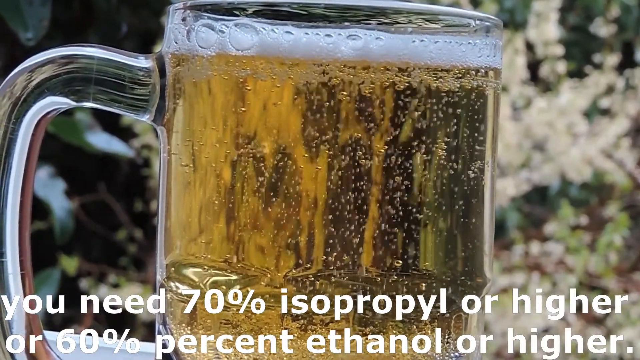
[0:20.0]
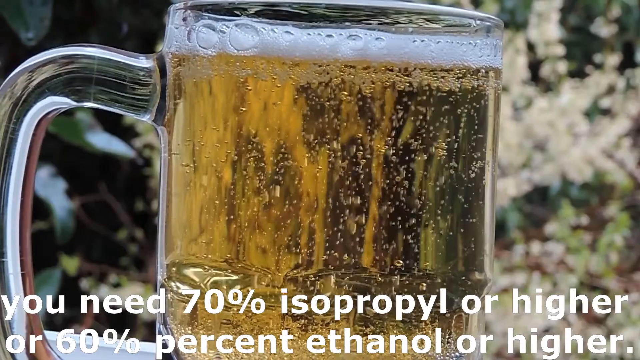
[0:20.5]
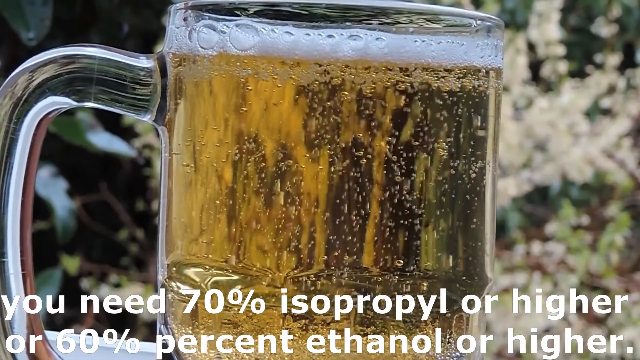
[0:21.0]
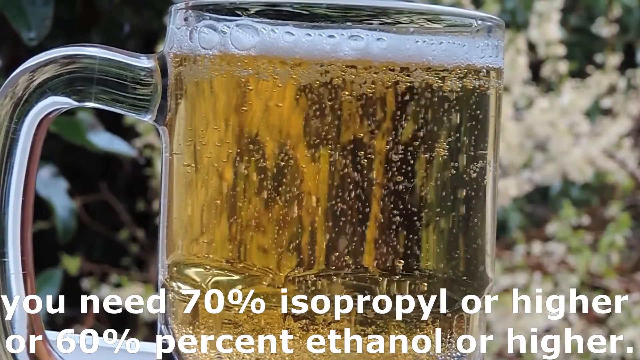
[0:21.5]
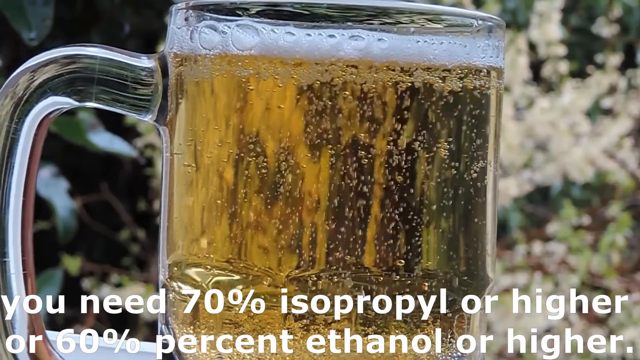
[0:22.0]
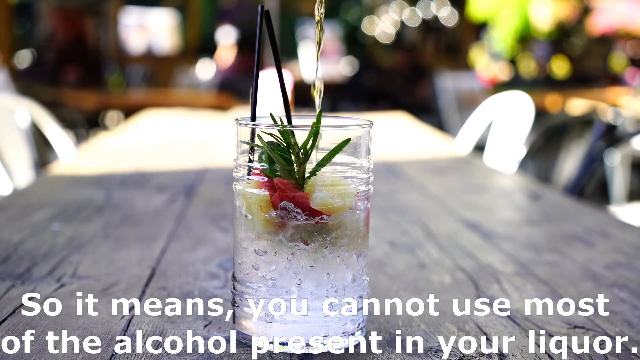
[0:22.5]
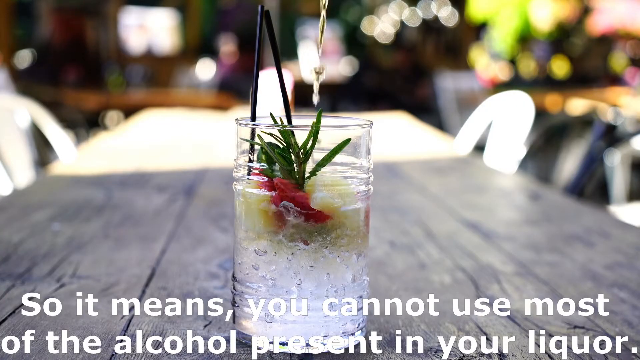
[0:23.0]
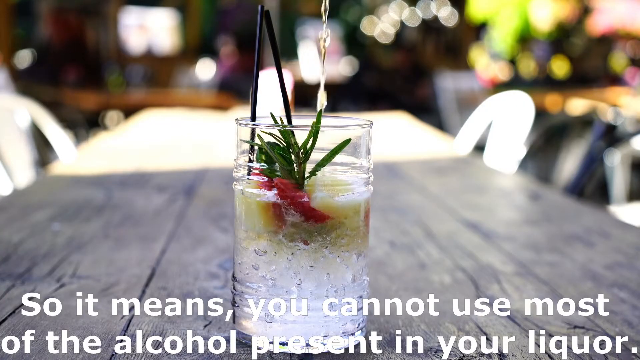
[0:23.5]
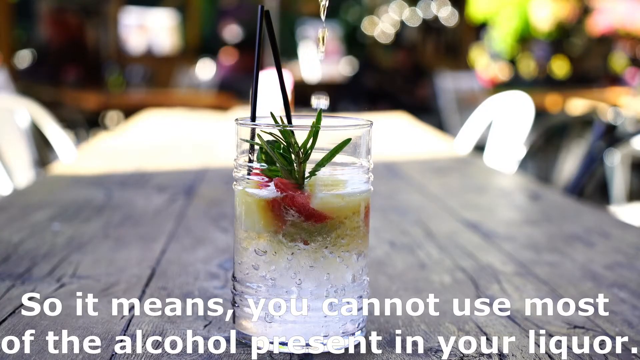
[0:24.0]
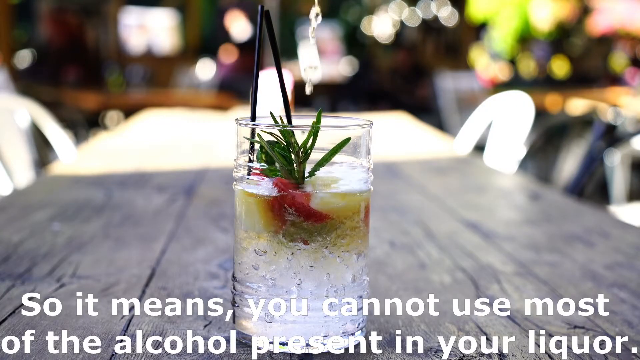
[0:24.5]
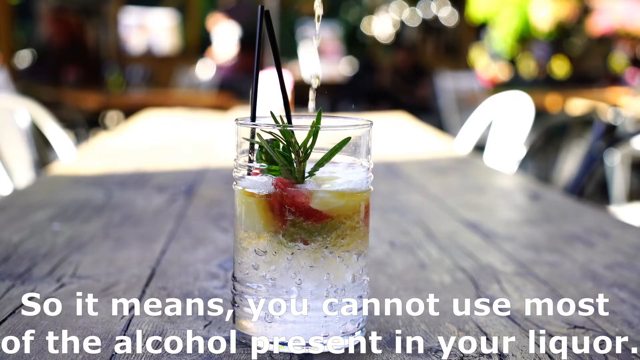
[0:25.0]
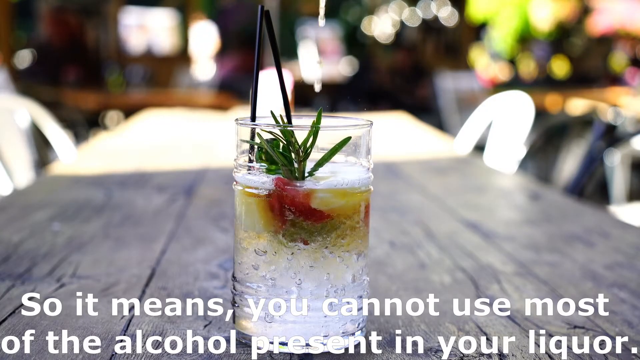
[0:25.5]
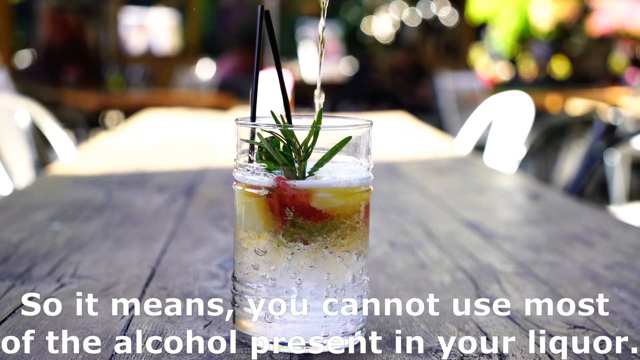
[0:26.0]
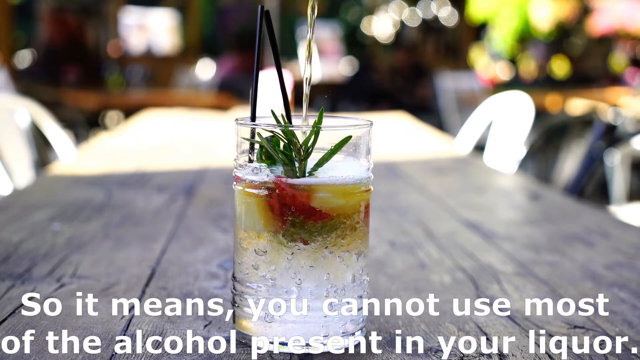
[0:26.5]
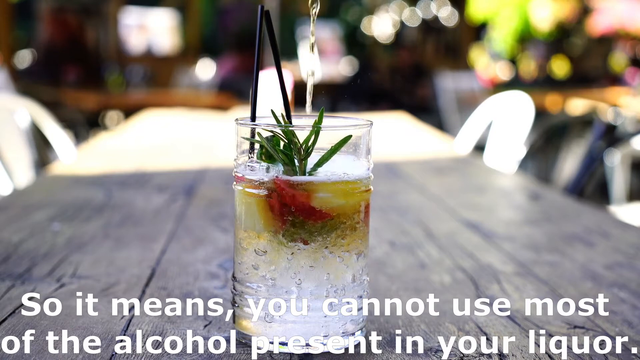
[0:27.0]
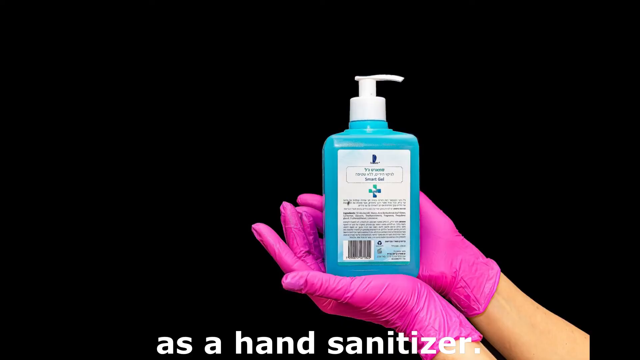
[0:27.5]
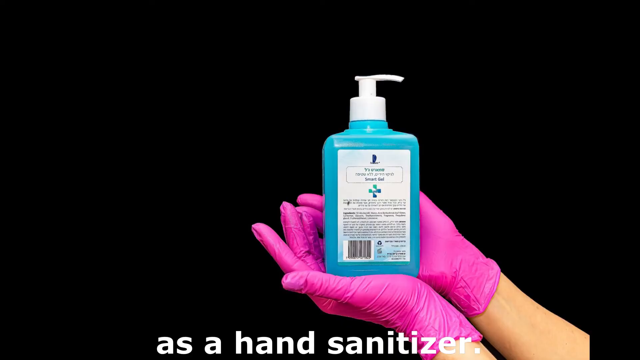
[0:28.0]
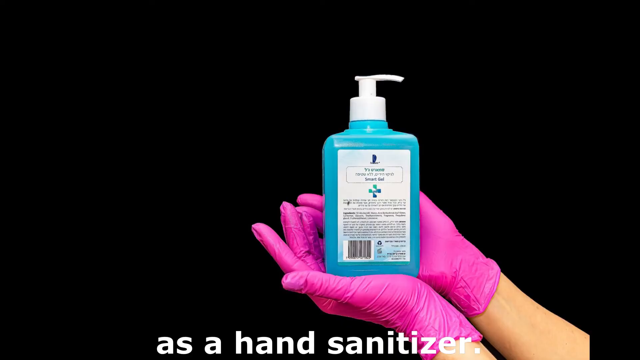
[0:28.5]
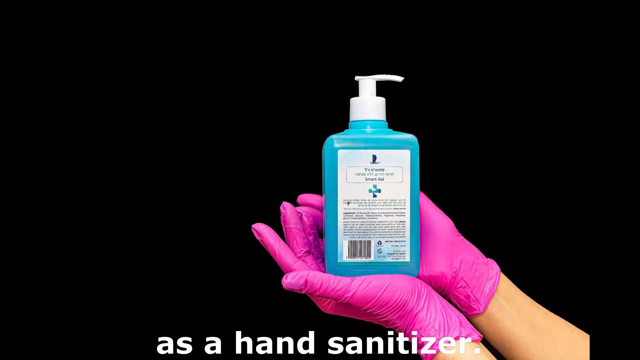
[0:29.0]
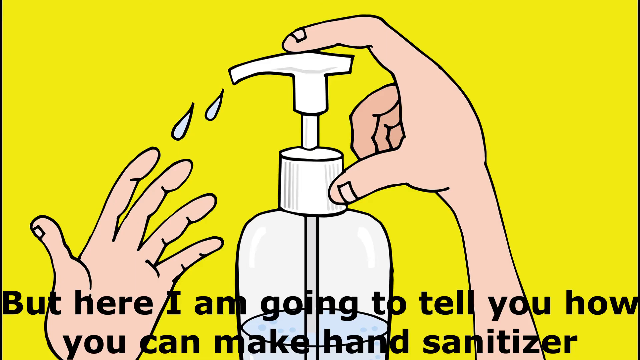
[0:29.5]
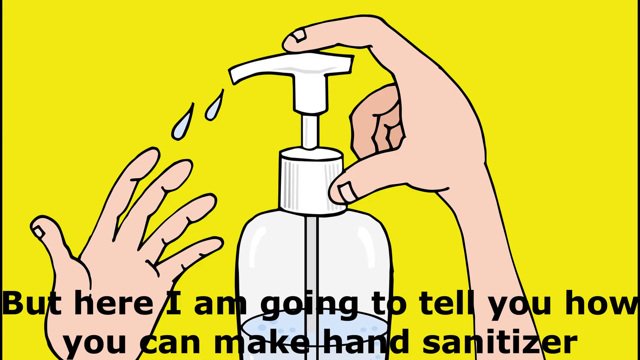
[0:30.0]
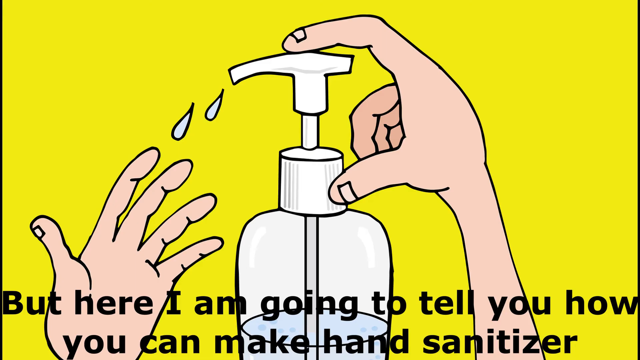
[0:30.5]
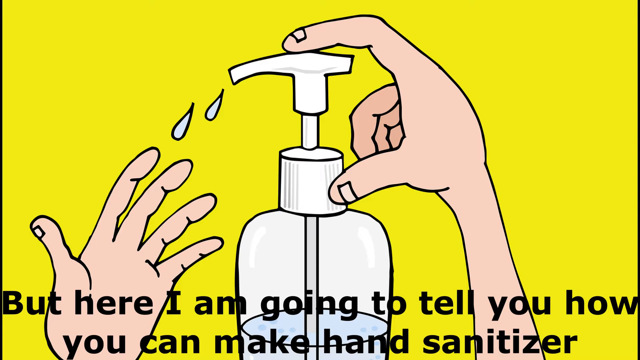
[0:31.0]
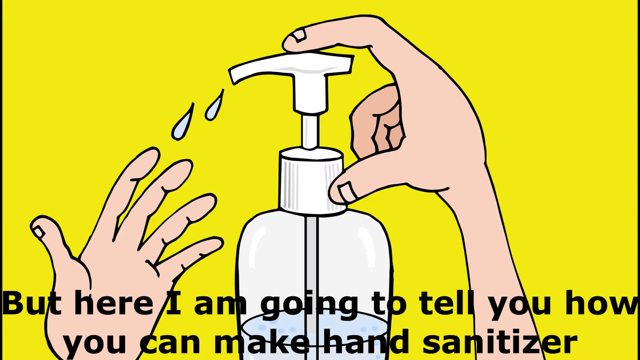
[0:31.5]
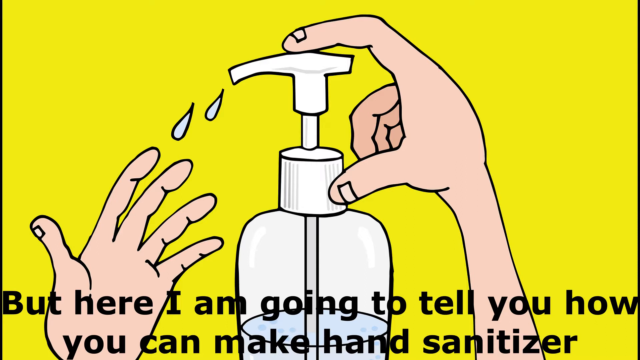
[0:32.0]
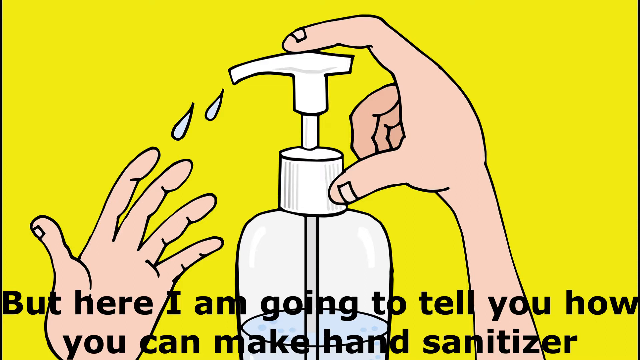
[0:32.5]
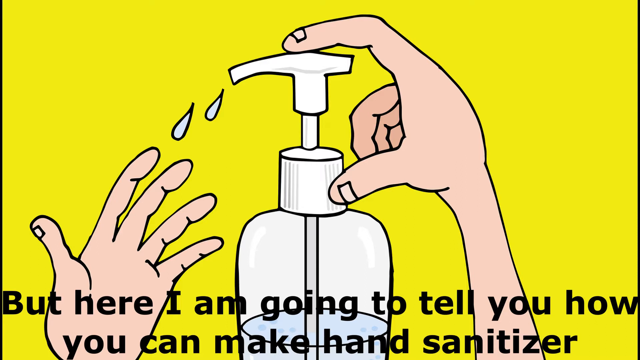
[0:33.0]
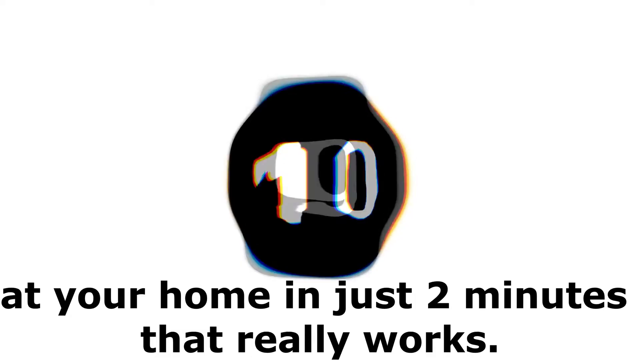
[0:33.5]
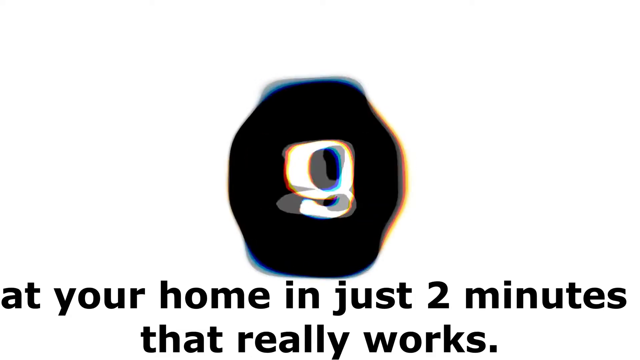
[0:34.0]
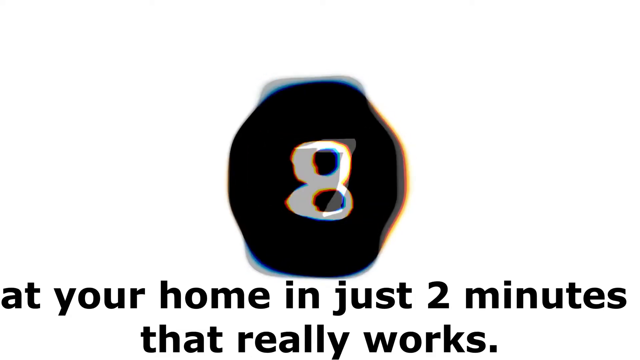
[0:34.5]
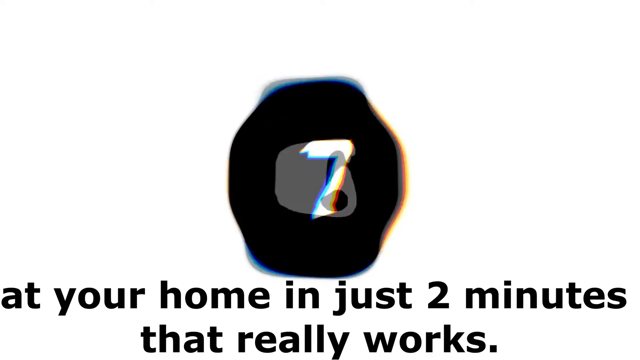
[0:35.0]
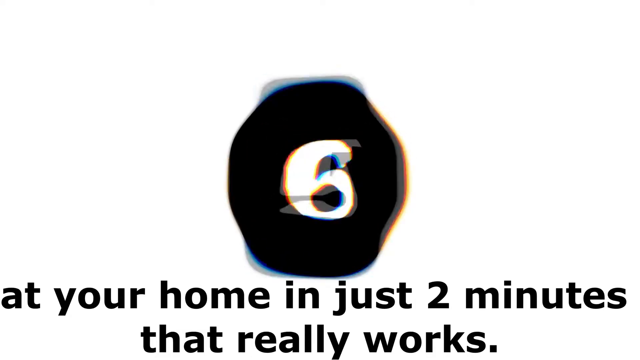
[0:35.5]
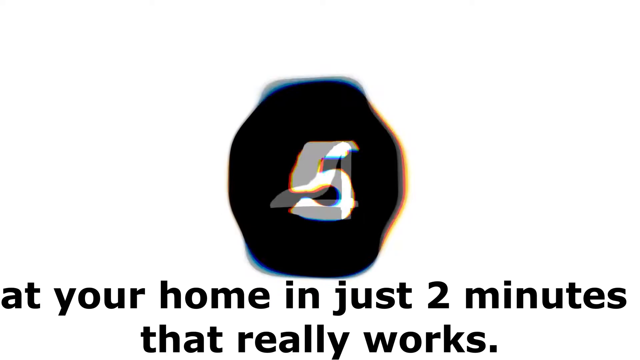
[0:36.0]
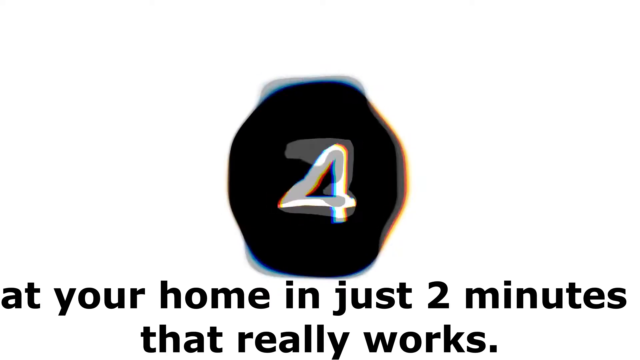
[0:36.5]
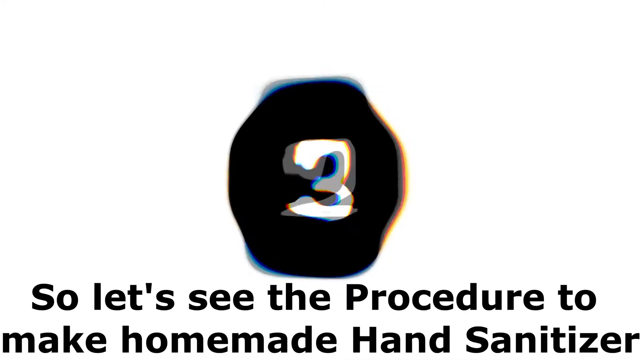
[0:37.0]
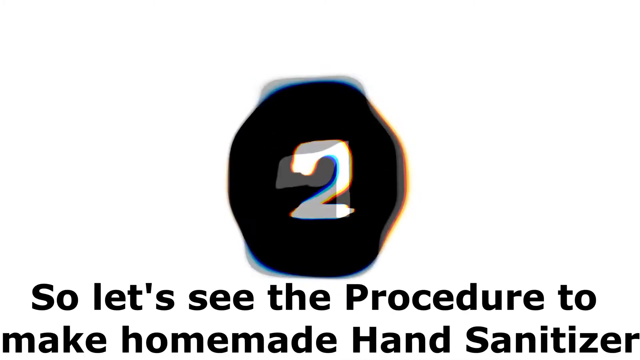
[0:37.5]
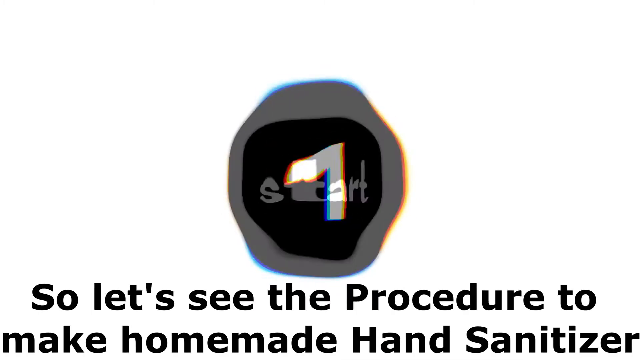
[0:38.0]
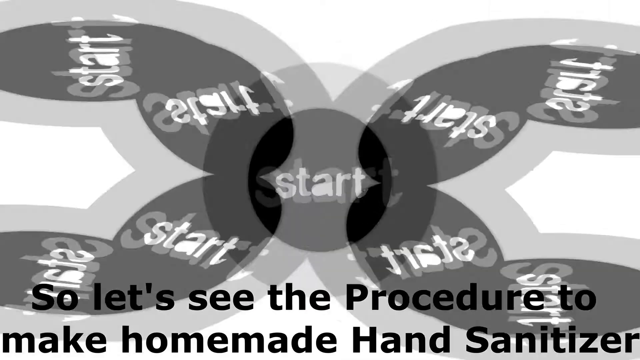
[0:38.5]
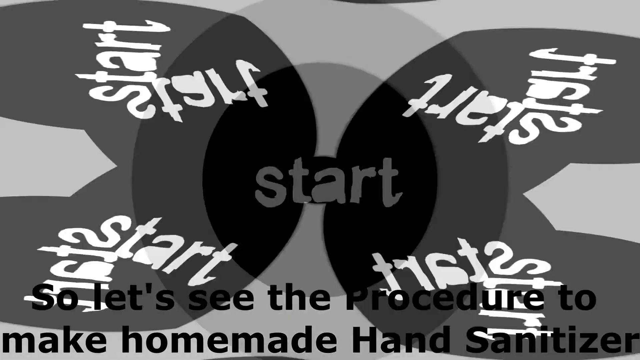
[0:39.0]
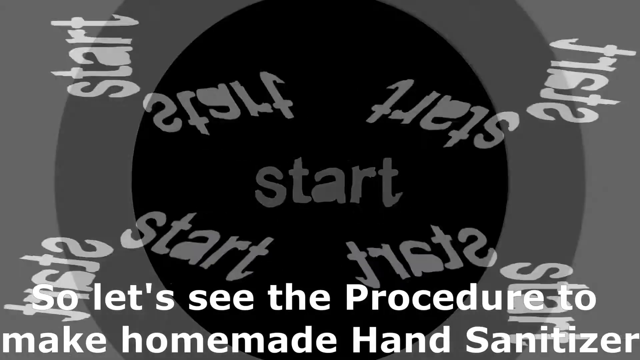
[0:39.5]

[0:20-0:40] The transparent cup holds a goldish, foaming liquid, with bubbles moving from the bottom of the cup up to the foam at the surface. The video then switches to a transparent cup containing a white liquid mixed with pink and yellow fruits; liquid is actively poured into the cup as the video progresses, and there are bubbles and foam inside. Text under the cup reads "so it means you can use most of the alcohol present in your liqueur." Next, a person wearing pink gloves holds up a blue bottle with a white cap, and another bottle has "hand sanitiser" written on it. Another picture shows two hands, one pressing on a bottle cap and the other receiving the liquid, drawn as a sketch illustration or cartoon. Text in black then reads "here I am going to tell you how you can make hand sanitiser," followed by a countdown: 9, 8, 5, 4, 3, 2, 1, start.